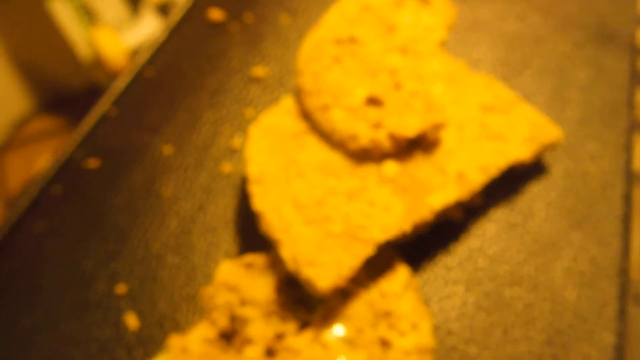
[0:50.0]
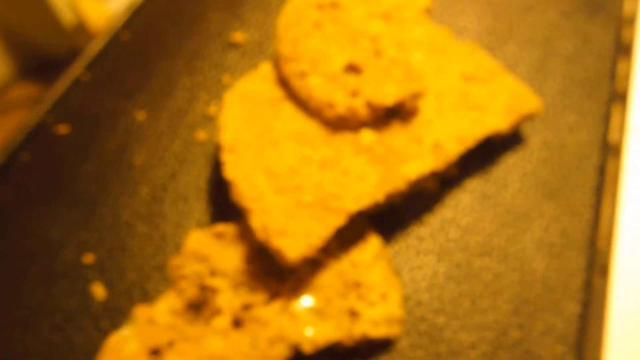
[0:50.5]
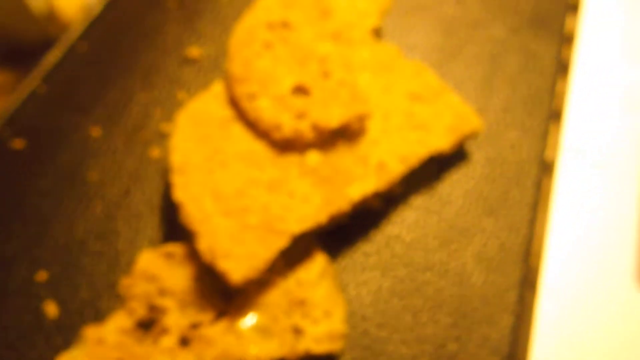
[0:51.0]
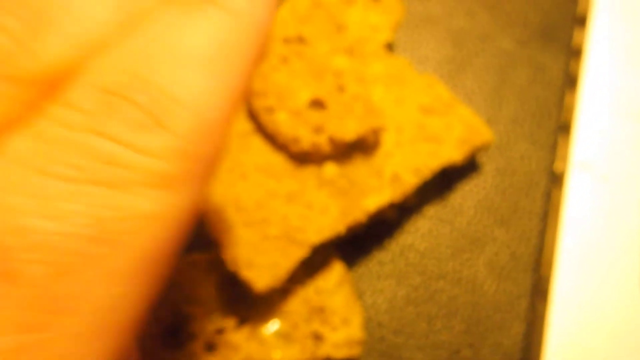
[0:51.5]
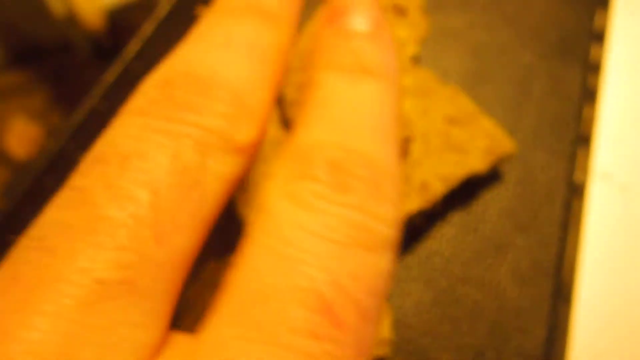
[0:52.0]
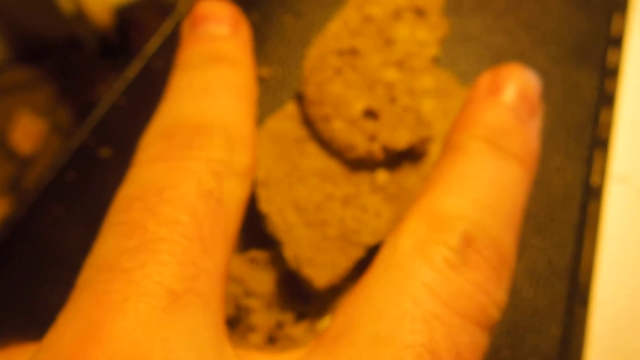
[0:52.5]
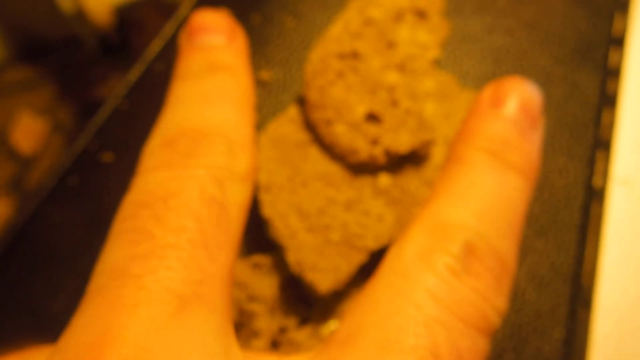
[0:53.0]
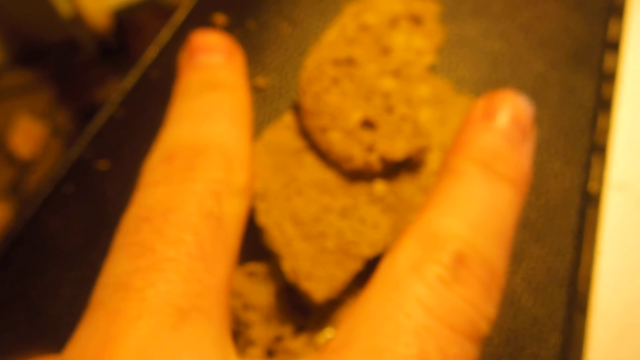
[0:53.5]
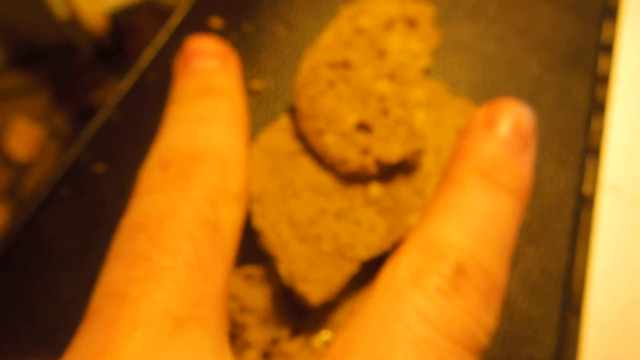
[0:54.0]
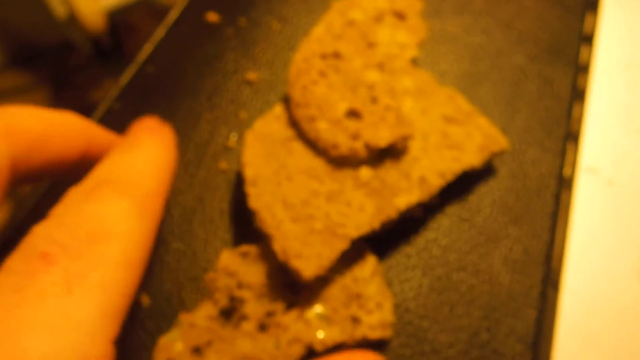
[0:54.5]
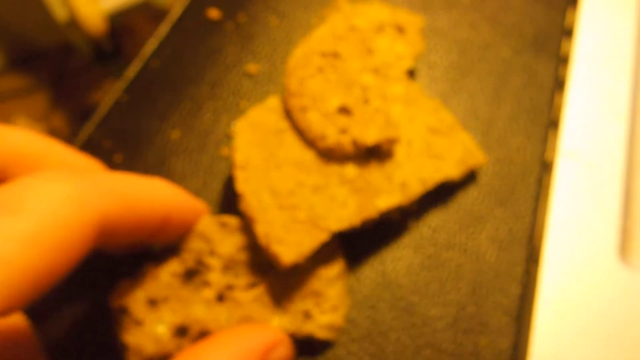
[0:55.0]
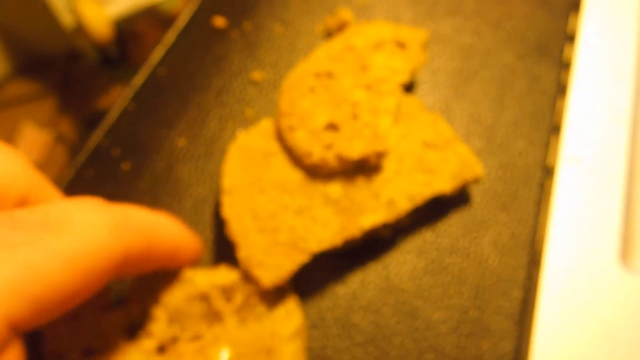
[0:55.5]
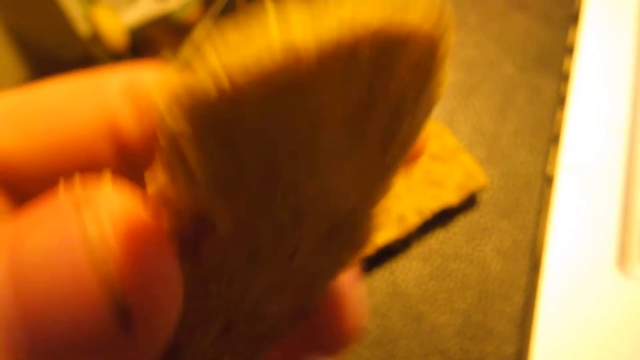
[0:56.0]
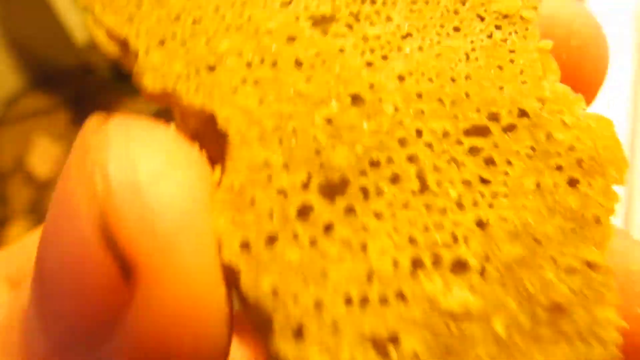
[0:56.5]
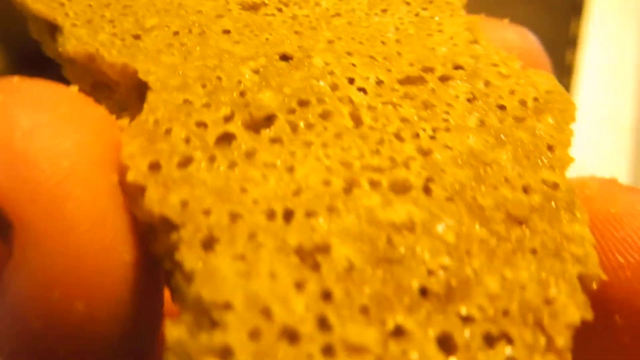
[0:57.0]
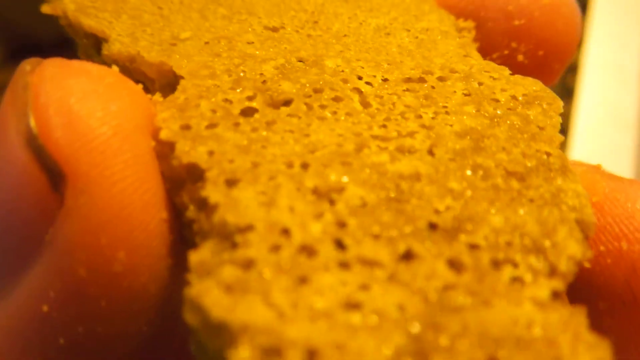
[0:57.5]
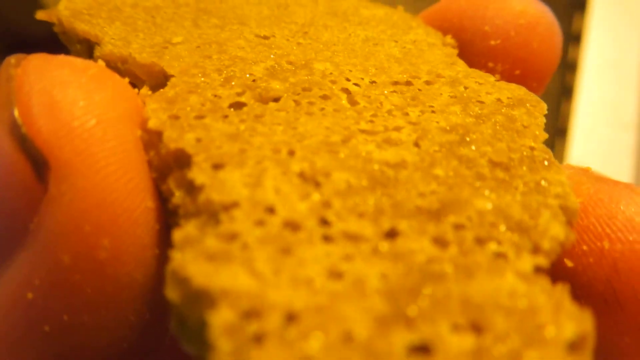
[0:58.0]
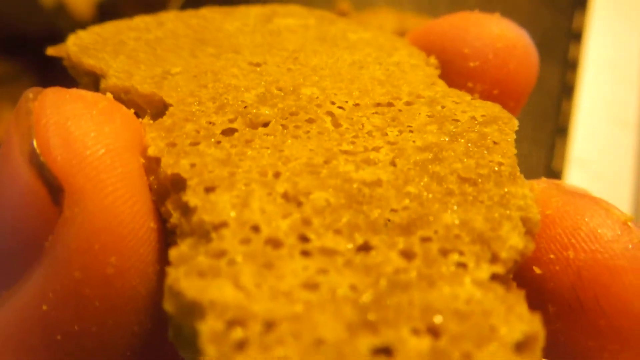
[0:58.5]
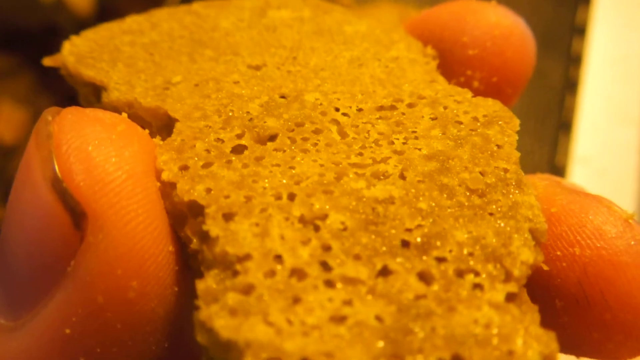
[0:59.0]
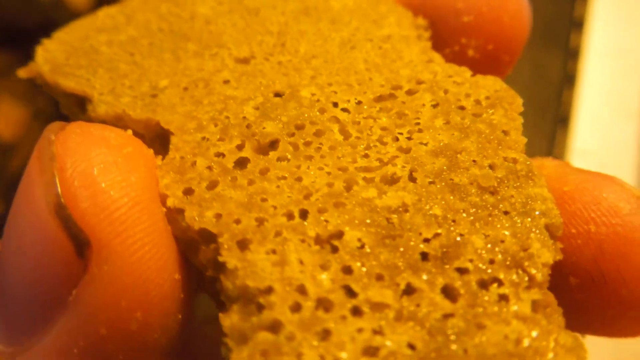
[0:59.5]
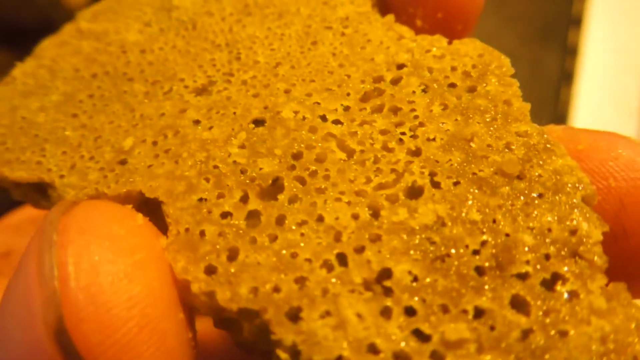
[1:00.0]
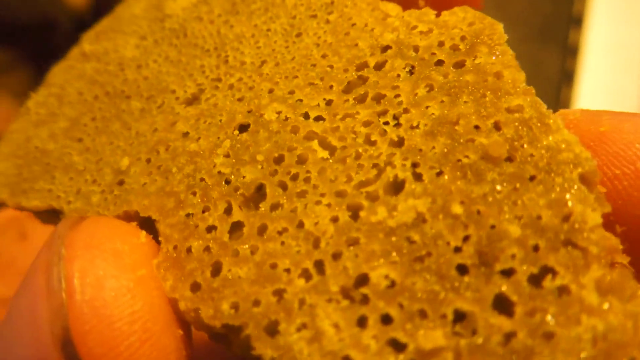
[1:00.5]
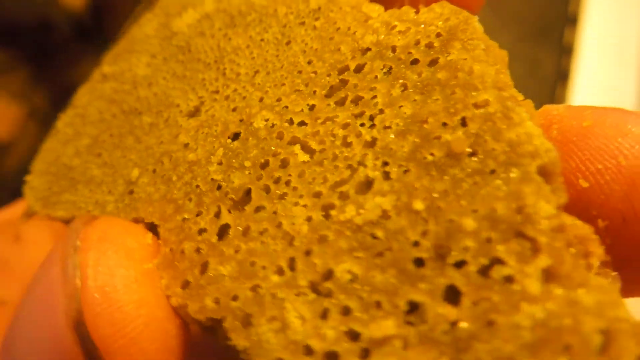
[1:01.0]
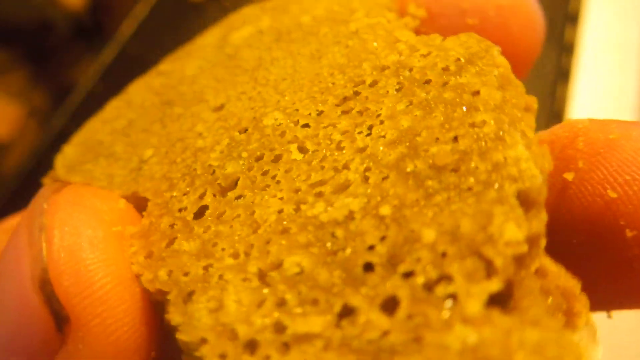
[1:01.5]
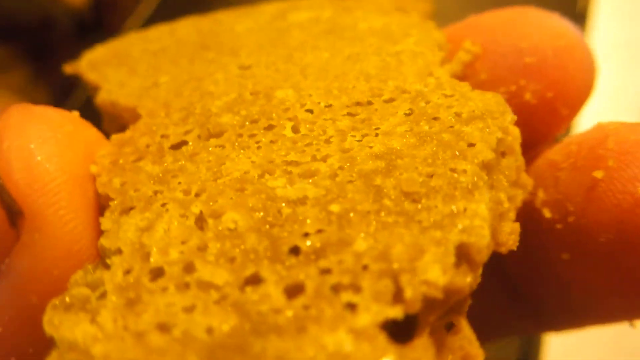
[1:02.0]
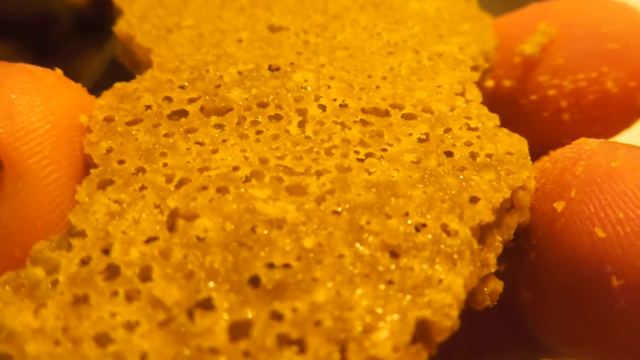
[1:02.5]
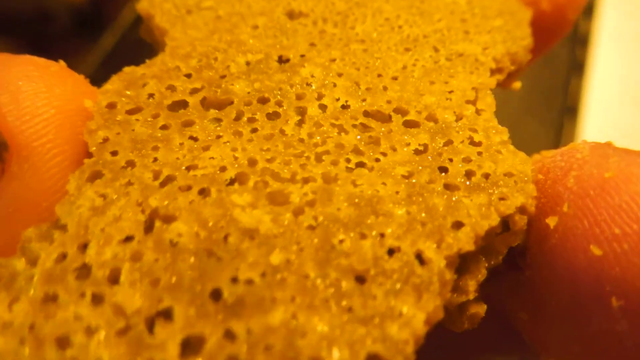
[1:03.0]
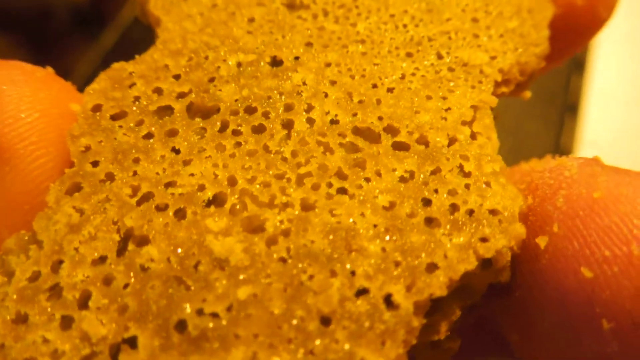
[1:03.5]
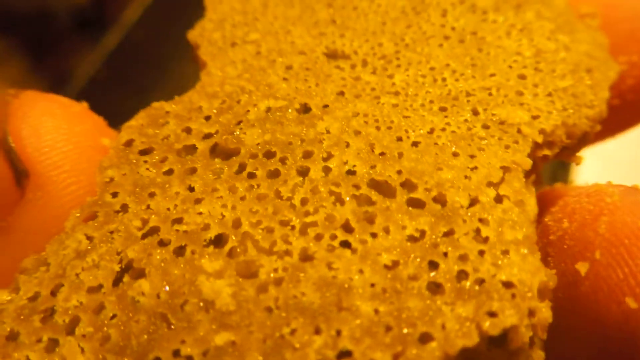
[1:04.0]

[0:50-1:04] The broken pieces are shown, one probably about two times larger than the other, still on the brown rectangular plate. He spreads two fingers apart and places them on top of the pieces he broke. The close-up of the holes and nooks and crannies inside continues, with the food kept in close-up.